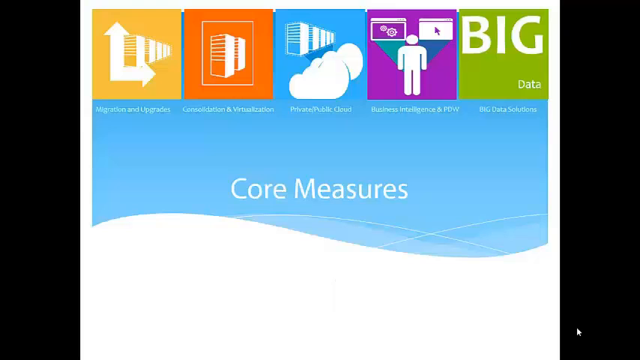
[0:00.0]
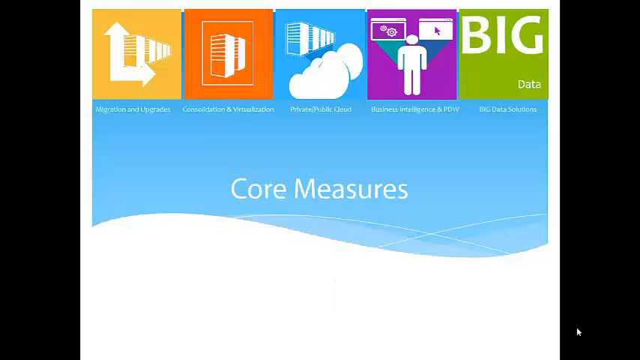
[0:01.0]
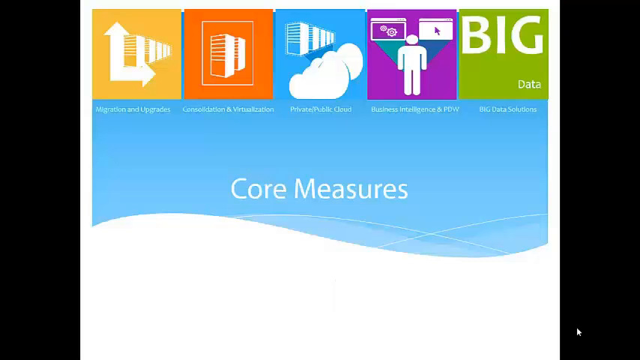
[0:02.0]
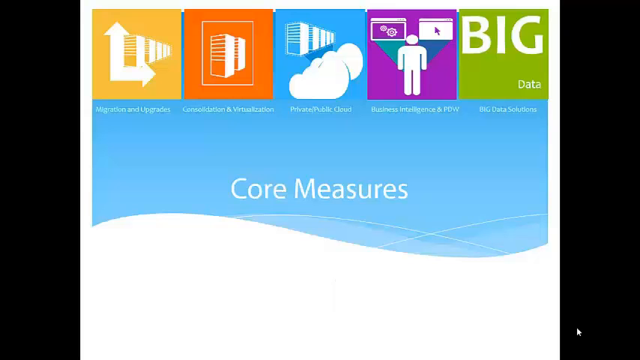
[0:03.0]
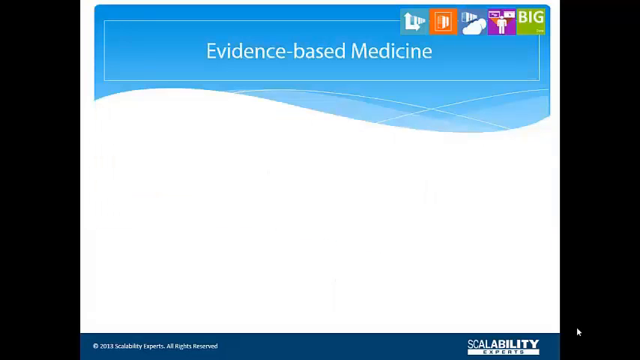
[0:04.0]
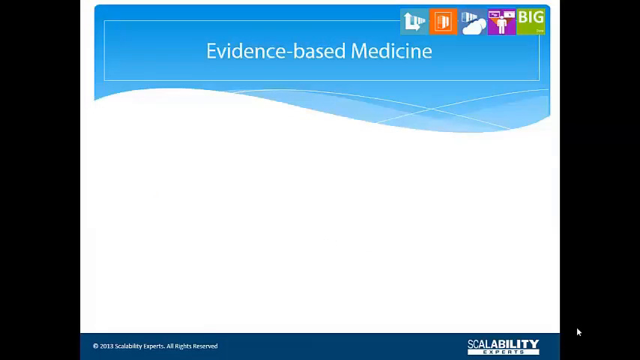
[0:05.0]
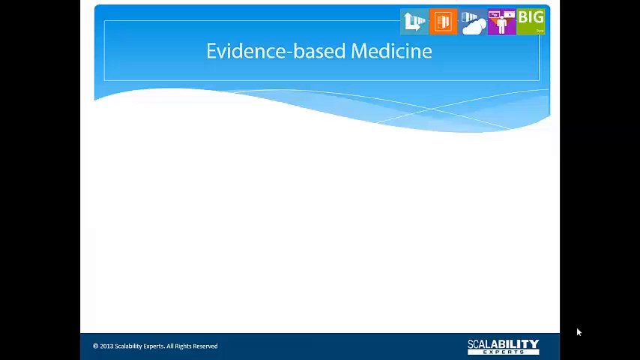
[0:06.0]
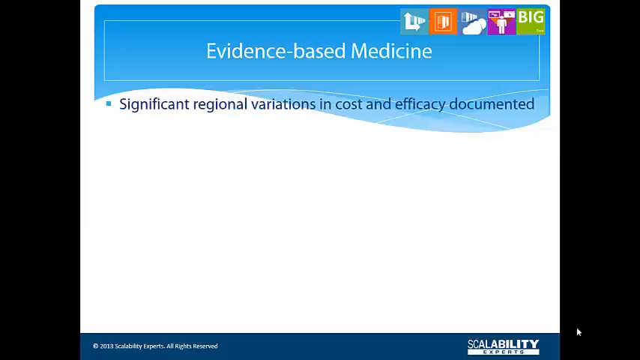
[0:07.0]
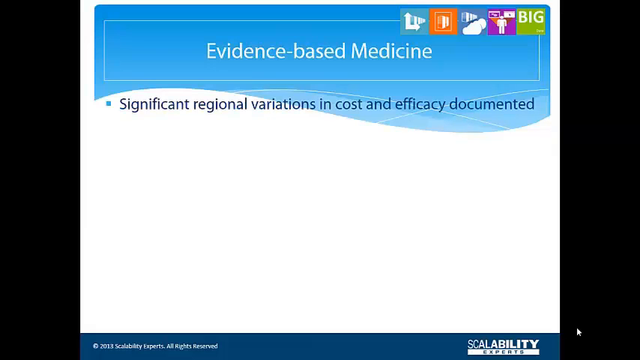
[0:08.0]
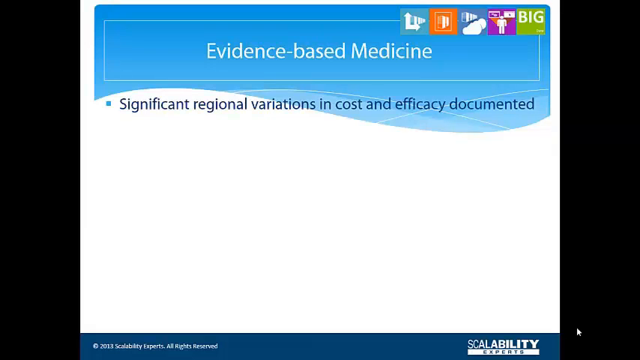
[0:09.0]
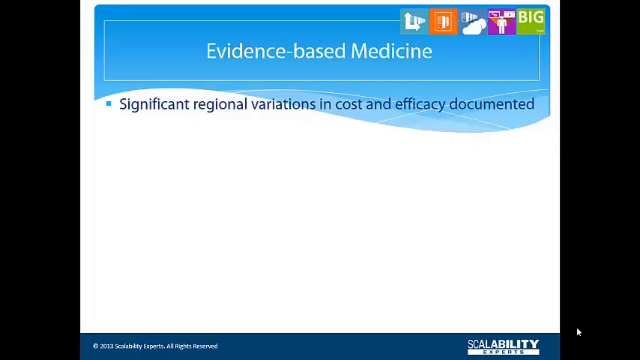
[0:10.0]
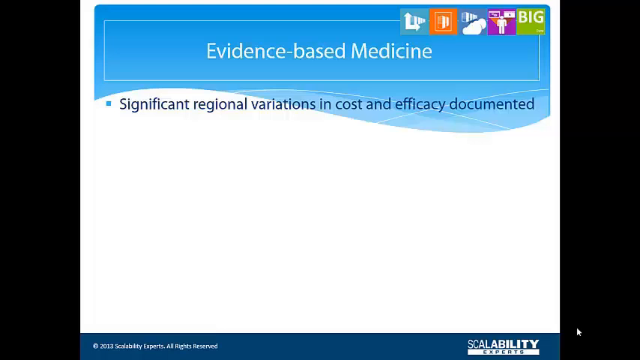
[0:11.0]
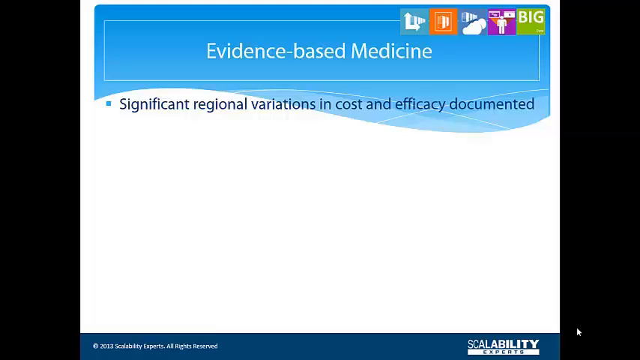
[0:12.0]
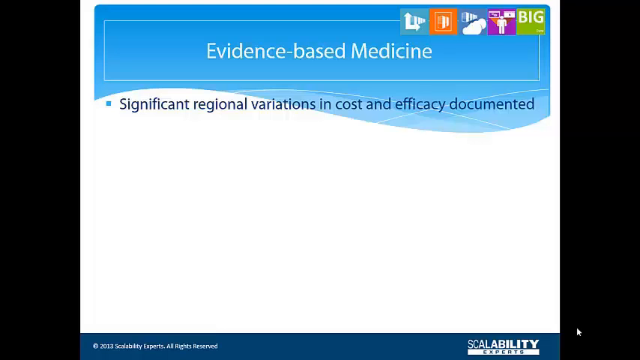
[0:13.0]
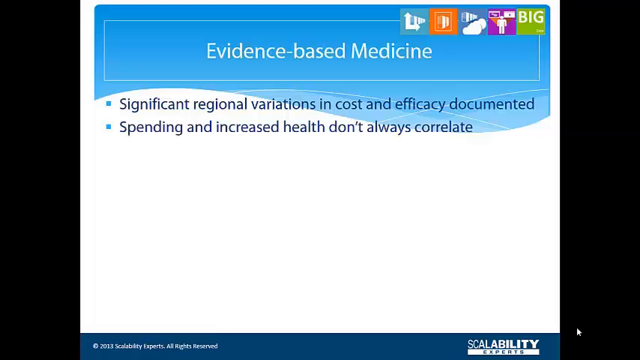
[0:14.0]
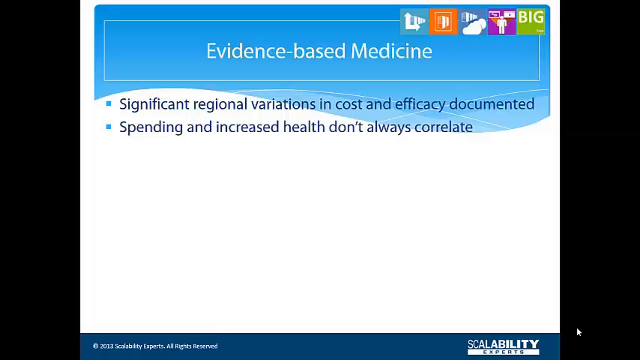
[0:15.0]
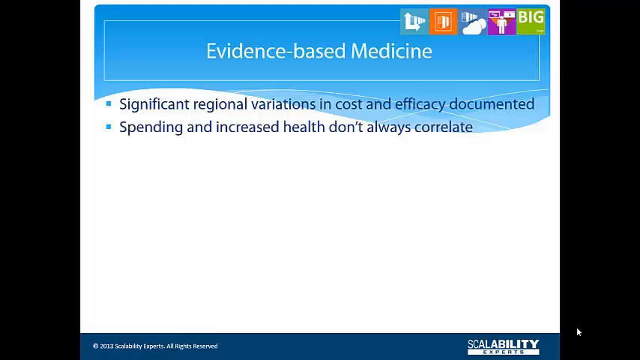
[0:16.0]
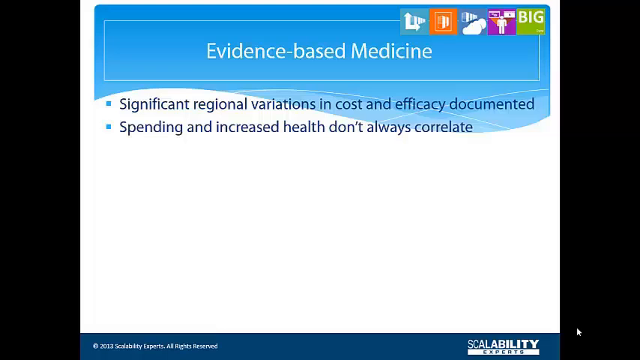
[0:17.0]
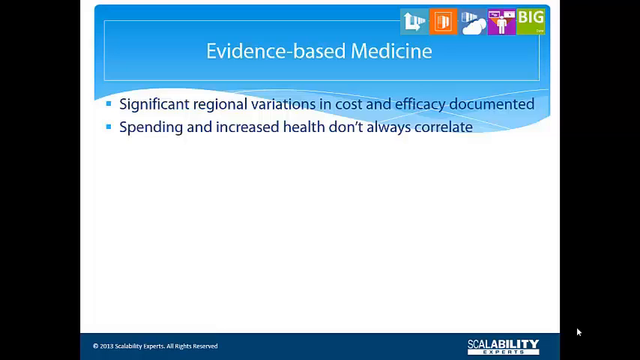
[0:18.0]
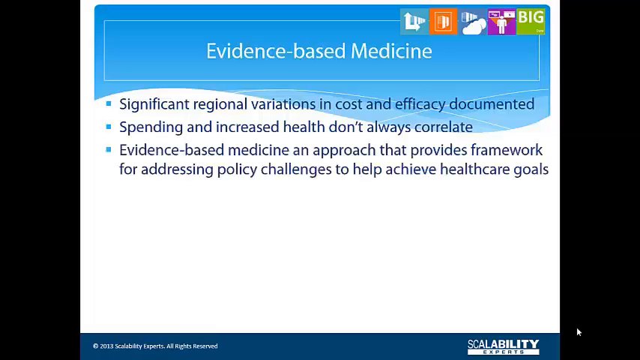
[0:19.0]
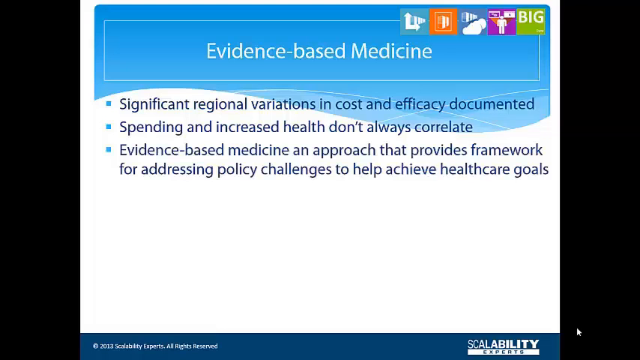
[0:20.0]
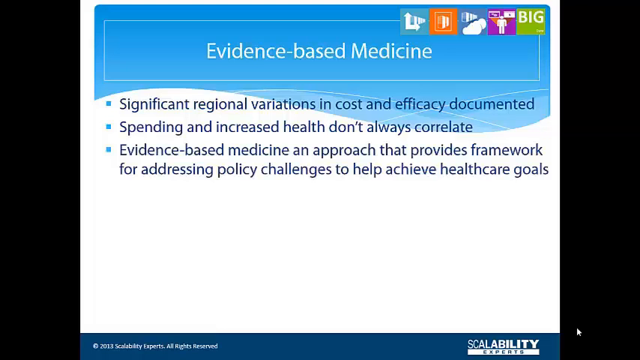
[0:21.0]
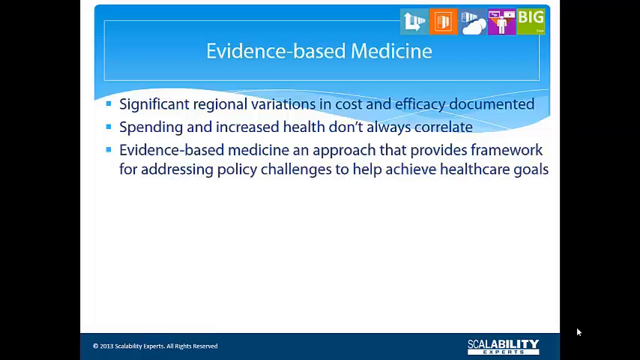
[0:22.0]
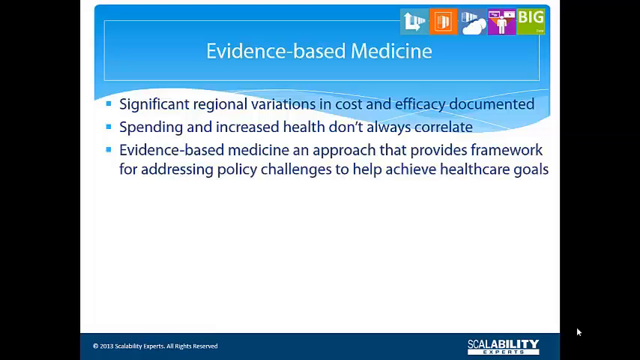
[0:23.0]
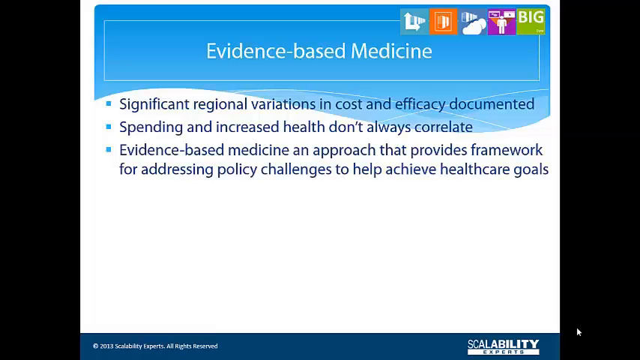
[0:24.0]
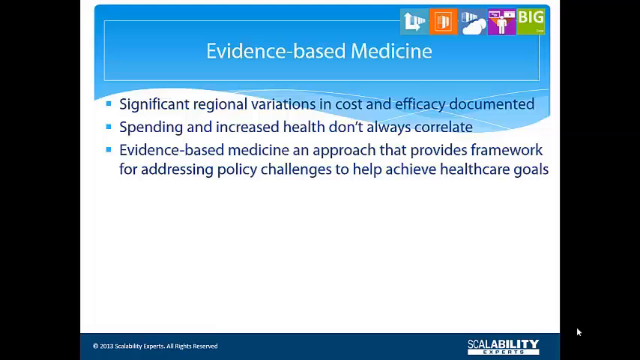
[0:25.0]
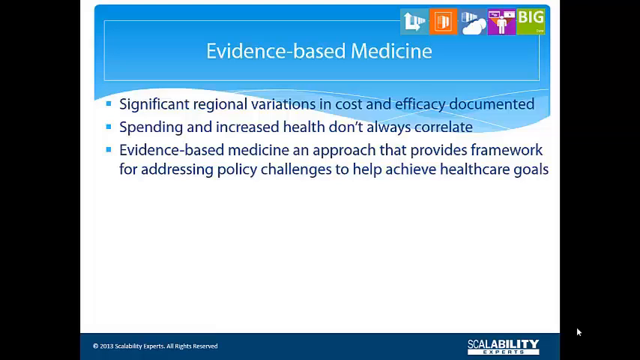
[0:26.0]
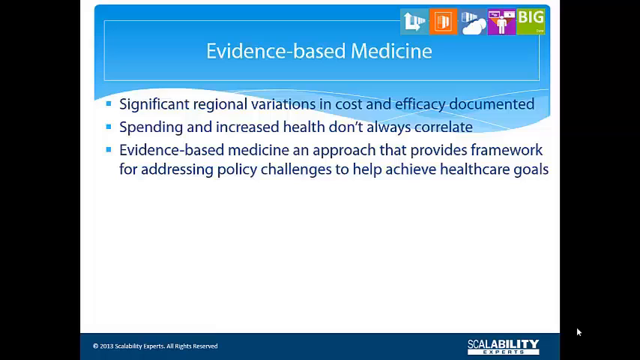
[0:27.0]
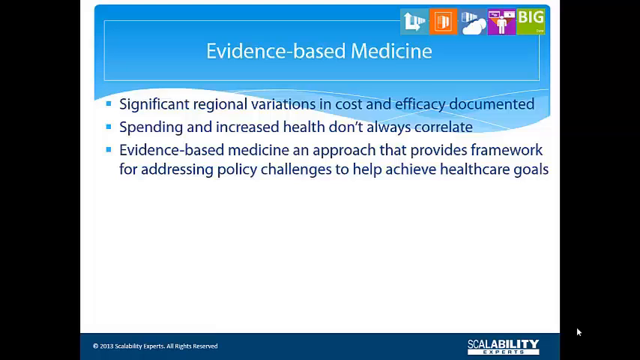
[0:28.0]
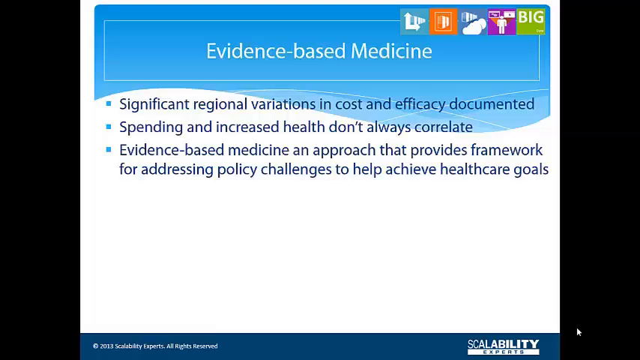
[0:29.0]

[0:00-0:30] A slide fills the open area between two black towers on either side of the screen; the screen is open at the top, where the slide fits in. Across the top of the slide are five charts, each with a description underneath, and below them are the words "Core measures". The bottom two-thirds of the slide looks like a combination of a wavy ocean and a contoured beach. From left to right, the blocks are labeled "Migration and updates", "Consolidation and validation", "Private public cloud", "Business intelligence" and "Big data solutions". The leftmost block shows a pair of white arrows, one pointing up and the other pointing right. The next block shows what looks like two computer mainframe stands, one standing in front of the other. The third shows a line of mainframe stands with the appearance of clouds beneath them. The fourth shows a man standing with a screen above his right shoulder and another above his left shoulder. The fifth and final block has the word "big" at the top in very big letters and the word "data" at the bottom.